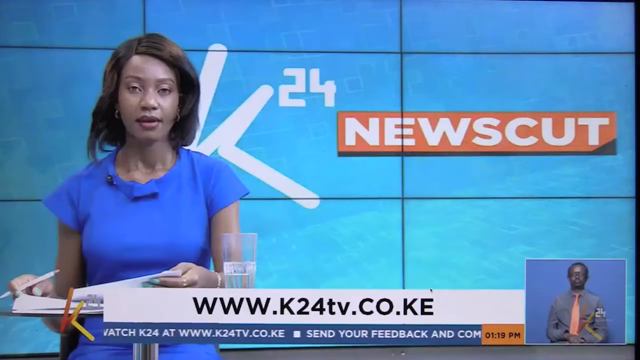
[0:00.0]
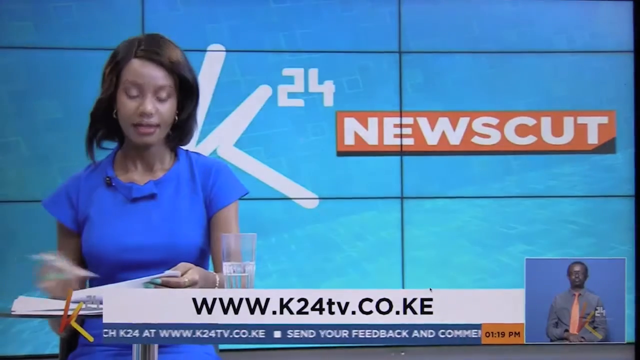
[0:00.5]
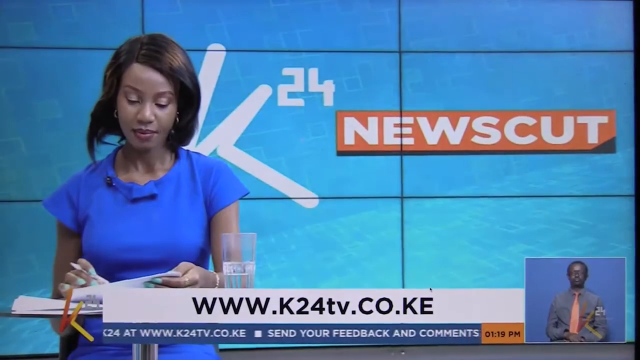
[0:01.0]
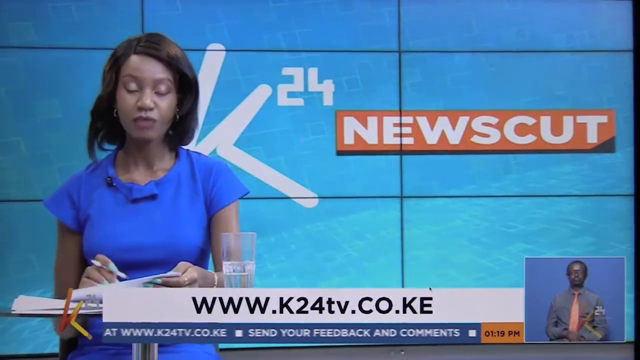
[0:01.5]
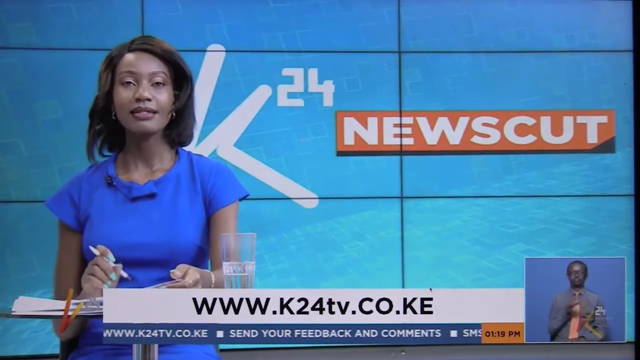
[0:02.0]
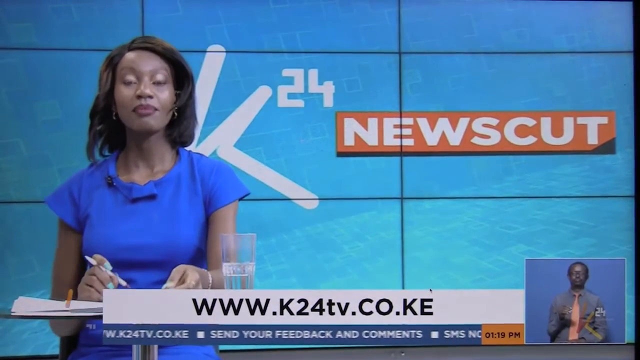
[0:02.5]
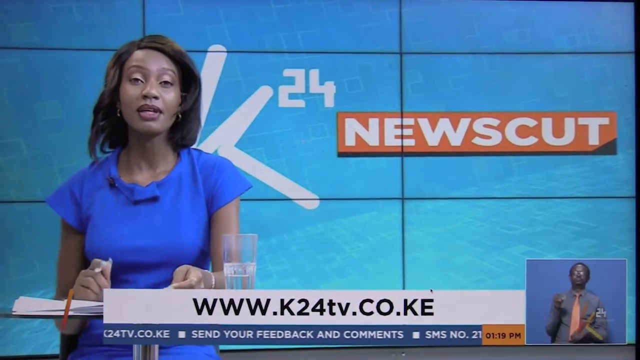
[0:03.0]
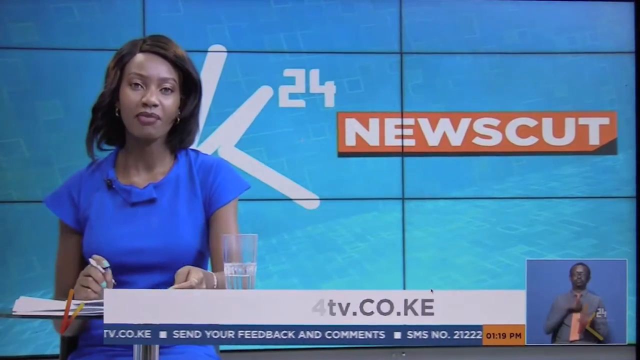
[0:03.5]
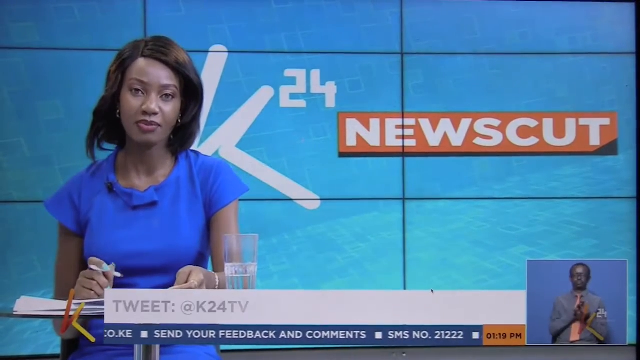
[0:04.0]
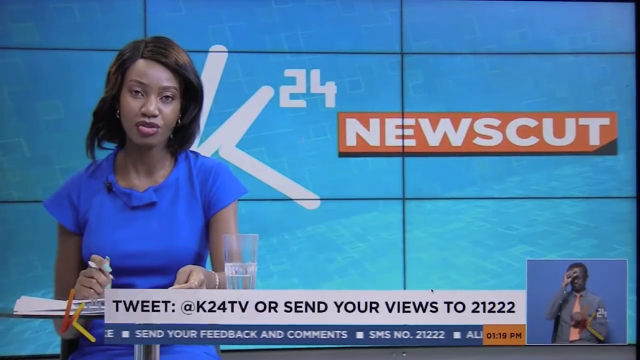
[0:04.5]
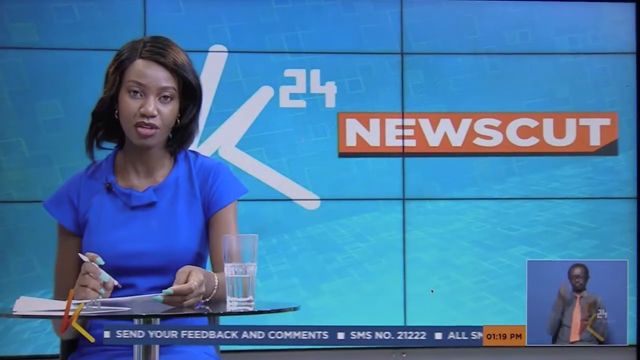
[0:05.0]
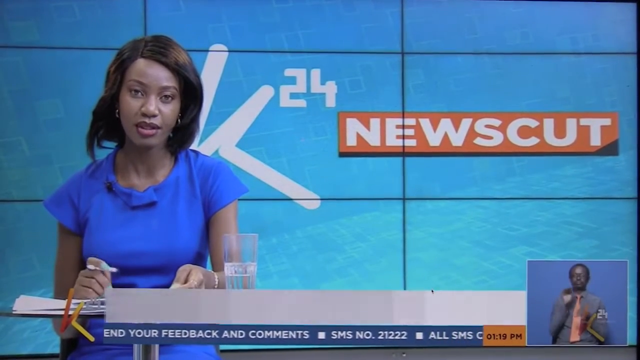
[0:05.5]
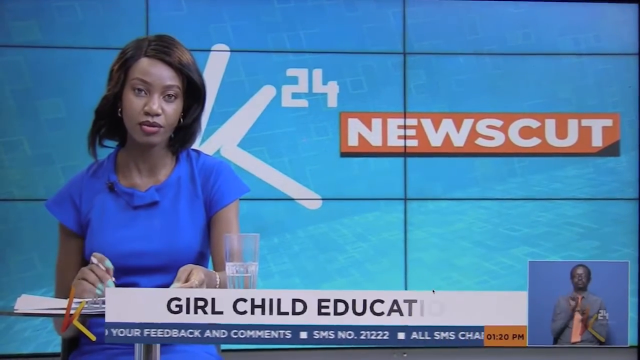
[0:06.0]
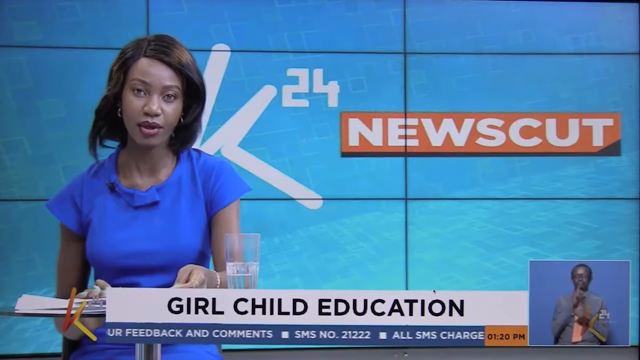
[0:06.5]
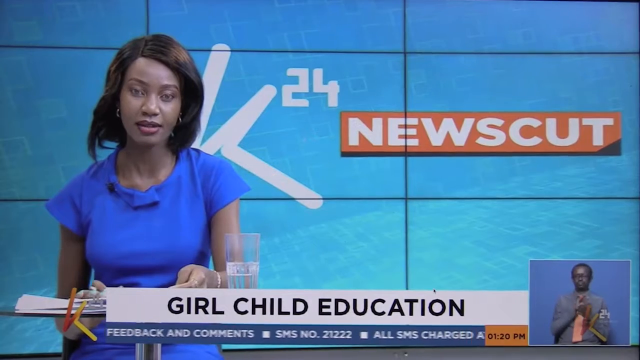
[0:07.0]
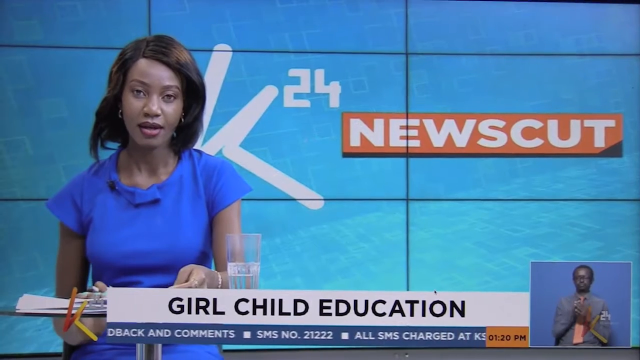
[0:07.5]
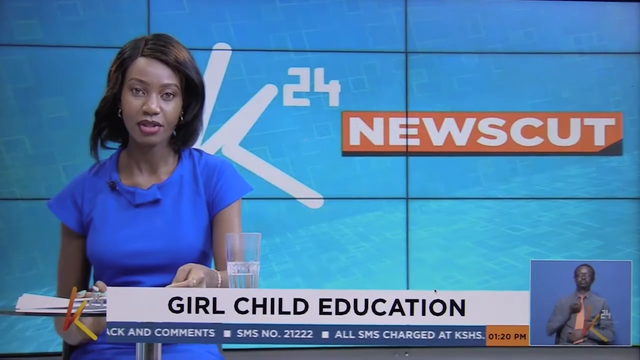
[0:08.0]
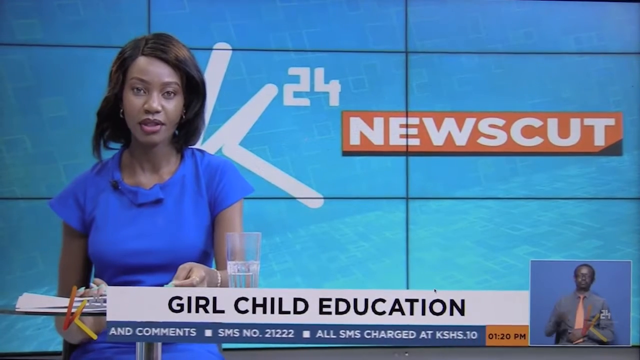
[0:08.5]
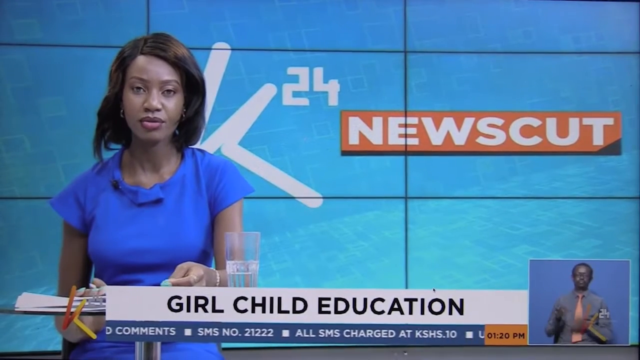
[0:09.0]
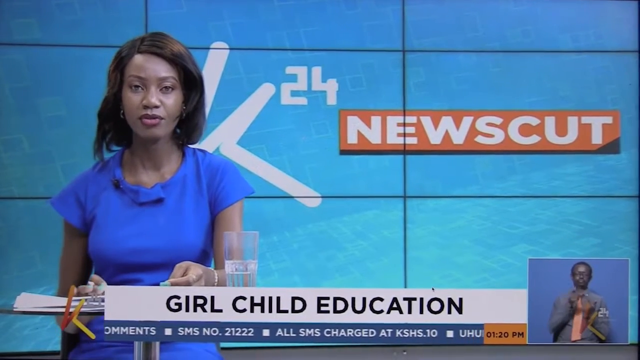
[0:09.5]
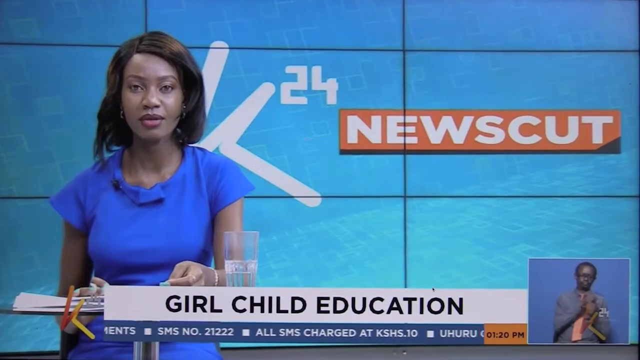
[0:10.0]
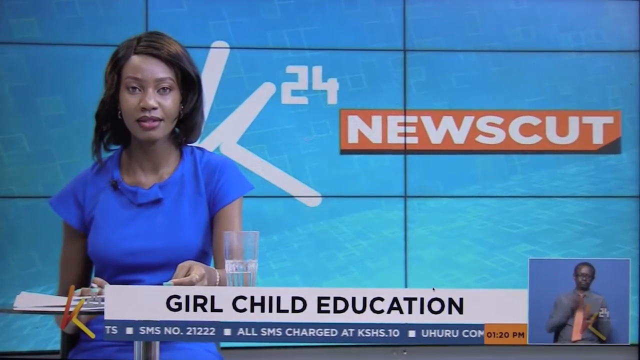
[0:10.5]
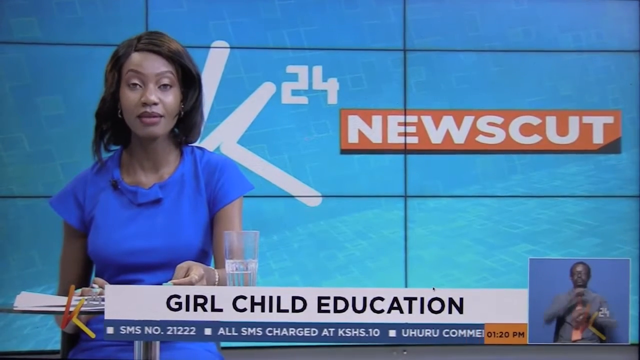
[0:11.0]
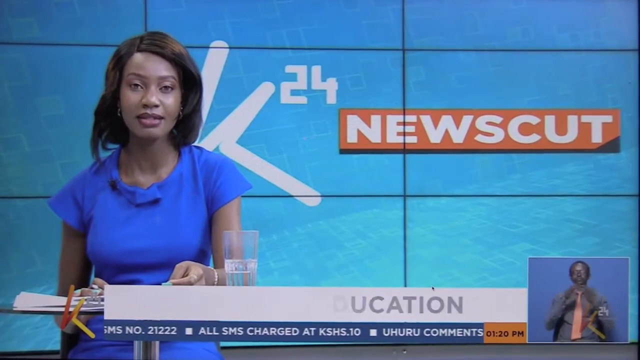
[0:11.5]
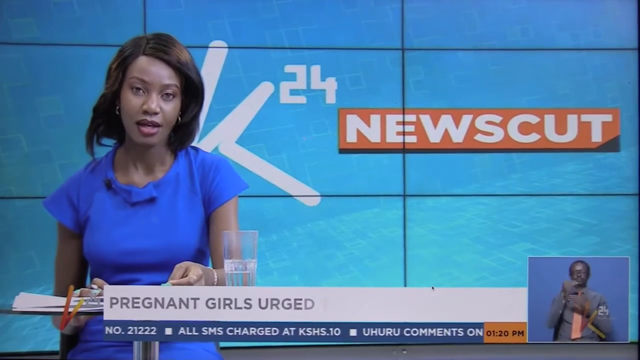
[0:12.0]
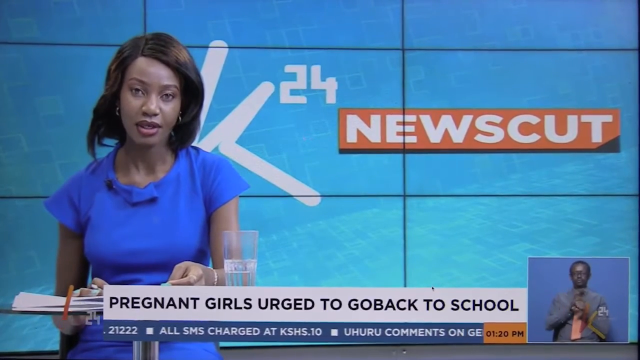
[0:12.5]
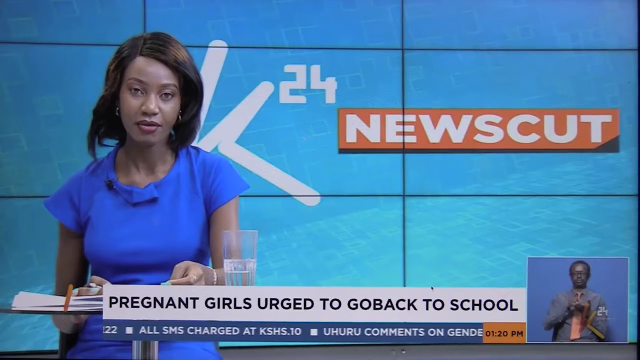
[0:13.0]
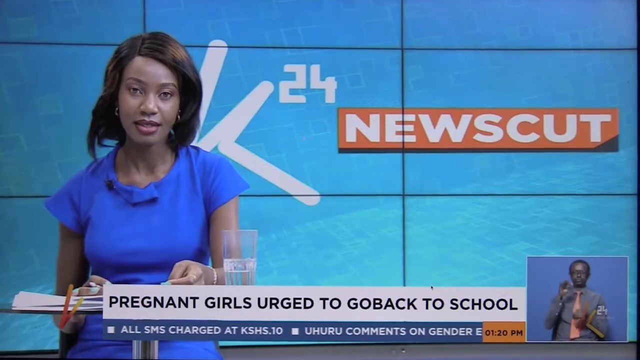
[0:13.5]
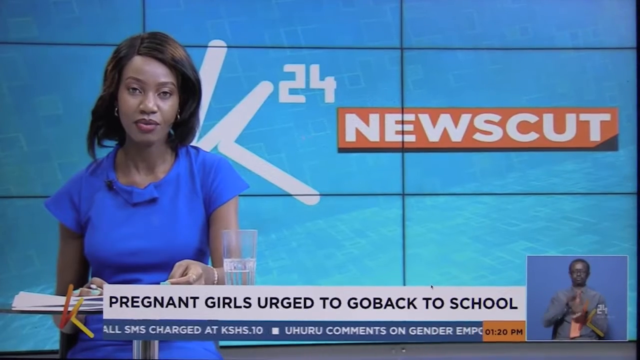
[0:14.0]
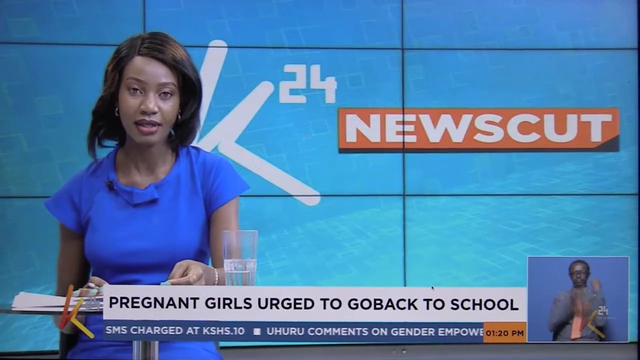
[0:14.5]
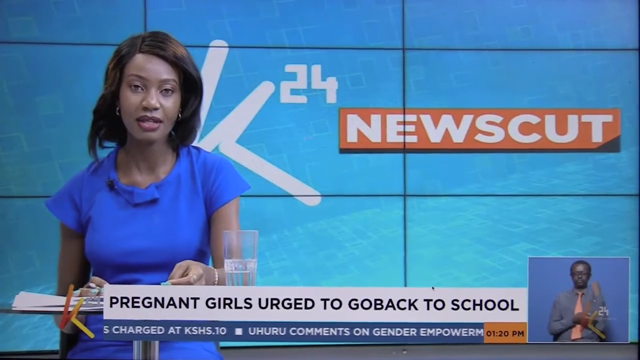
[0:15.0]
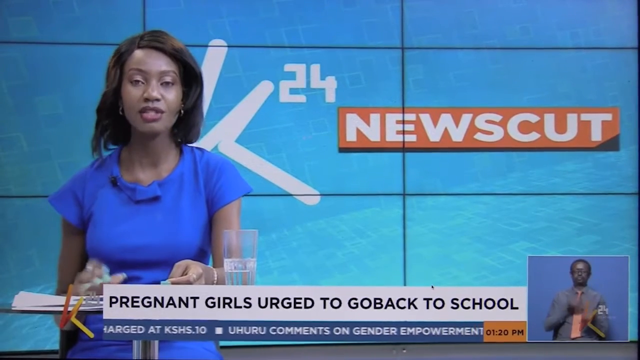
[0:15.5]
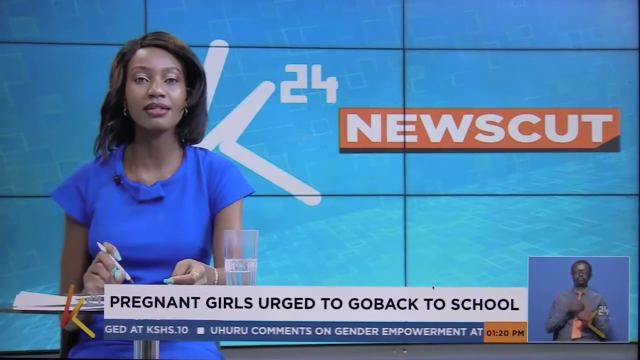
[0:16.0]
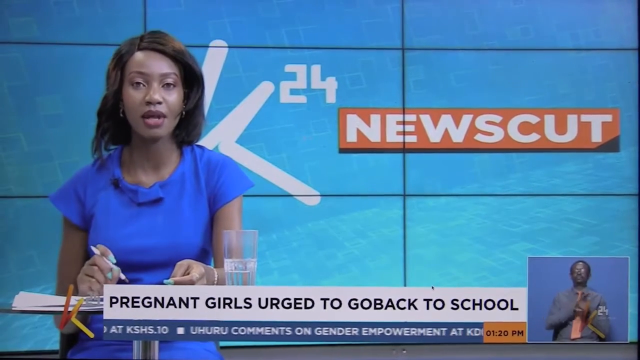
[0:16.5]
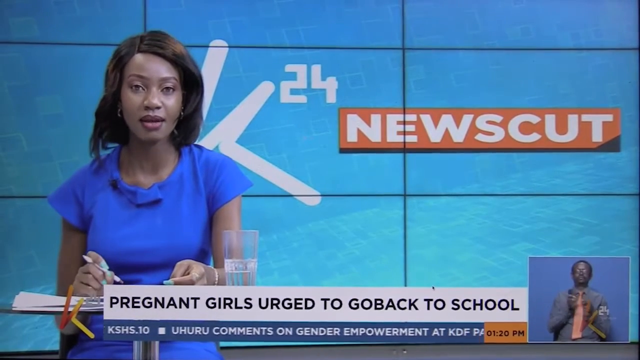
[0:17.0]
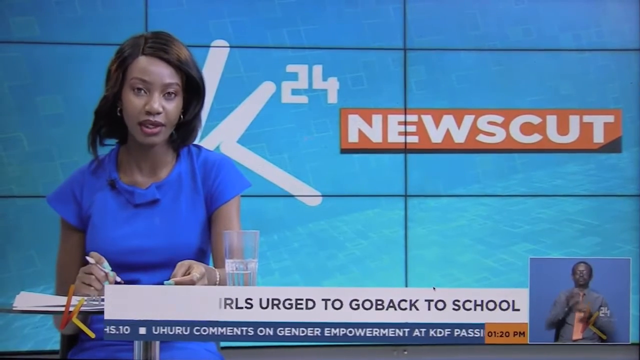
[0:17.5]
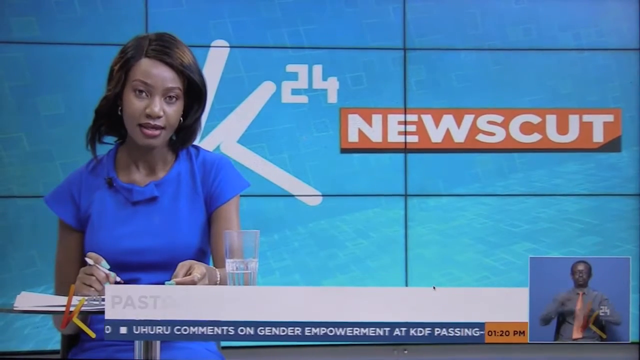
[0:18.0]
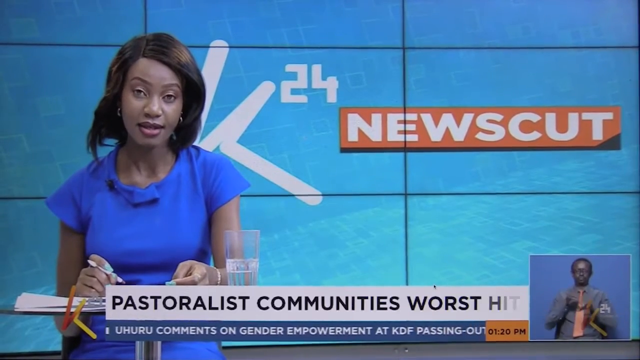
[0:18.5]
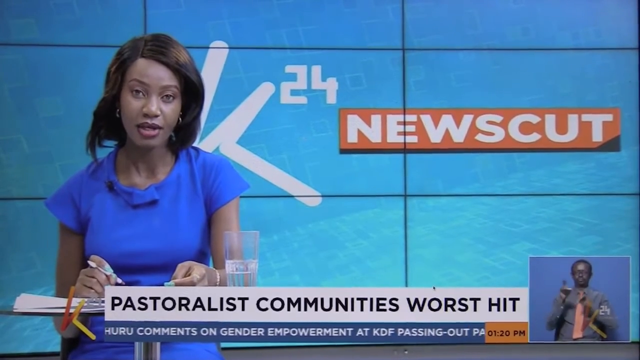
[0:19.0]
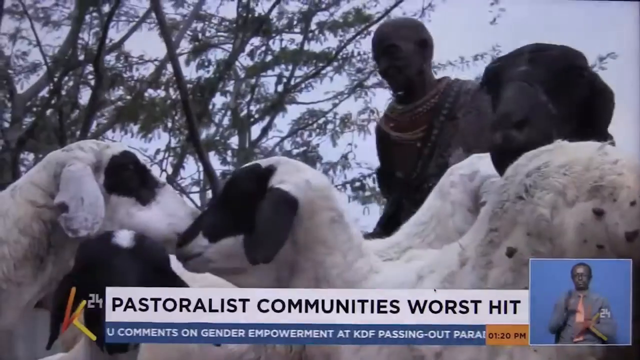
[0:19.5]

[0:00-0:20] A news broadcast opens with a female presenter who has dark skin and brownish, darkish hair down to her shoulders, wearing a blue top. The TV channel seems to be K24. Behind her is a screen with various rectangles containing "K24" in white font, and on the right are the words "news cut" in white font on an orange background. In the bottom right is a video of a man who seems to be giving sign language; he has dark skin and wears a tie and a grey suit. Along the bottom of the screen is the K24 TV website, which appears to be Kenyan because it ends in ".ke". As the broadcast continues, a news feed appears at the bottom of the screen about girl child education and pregnant girls being urged to go back to school. The video then quickly shows an image of a pastoralist community, apparently an individual on a farm in quite traditional clothing, next to a sheep.